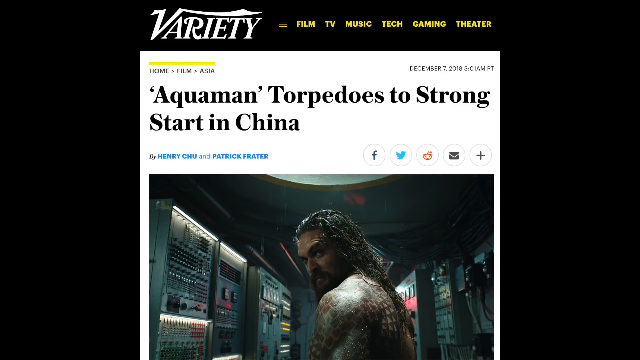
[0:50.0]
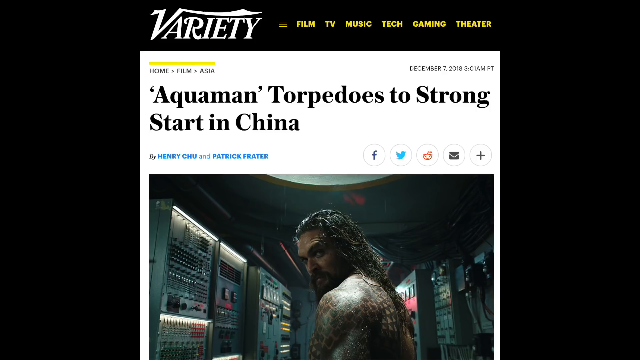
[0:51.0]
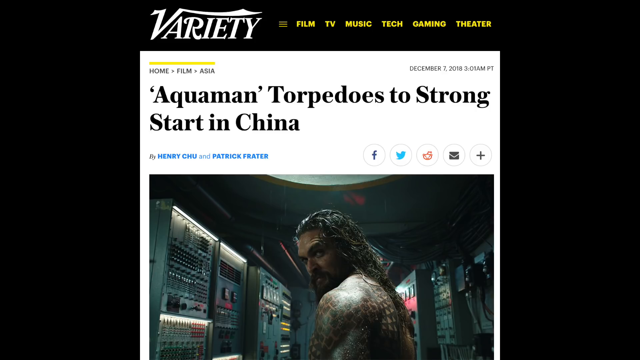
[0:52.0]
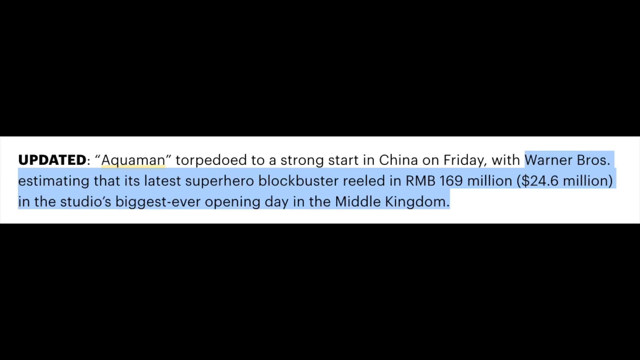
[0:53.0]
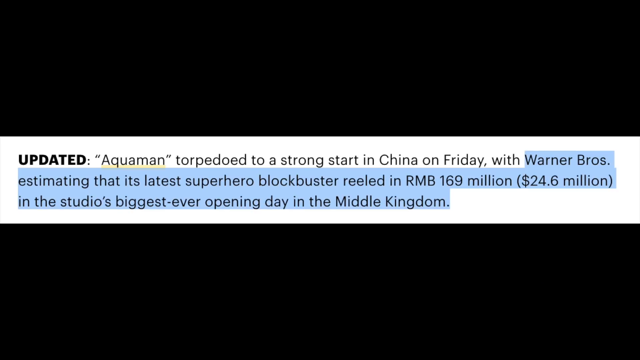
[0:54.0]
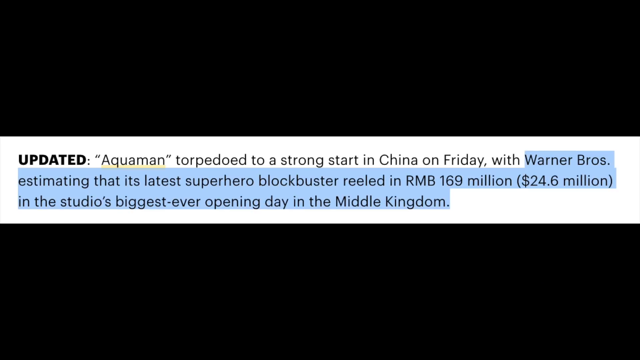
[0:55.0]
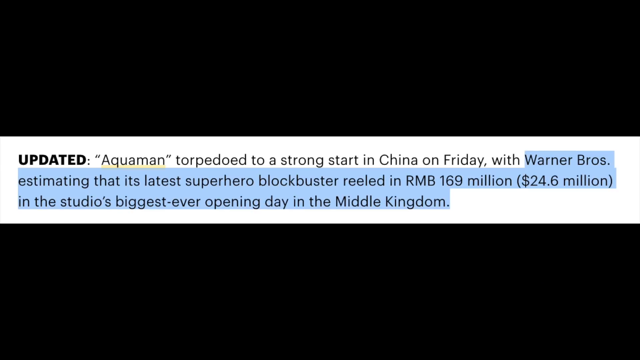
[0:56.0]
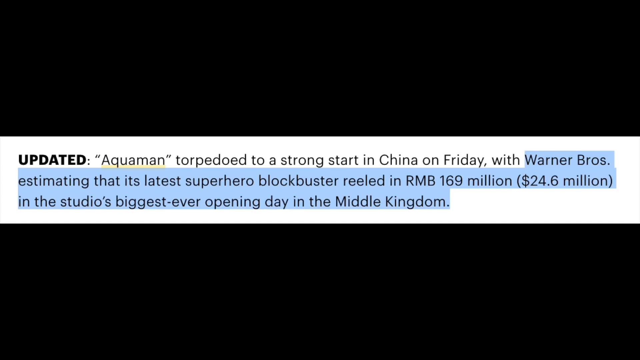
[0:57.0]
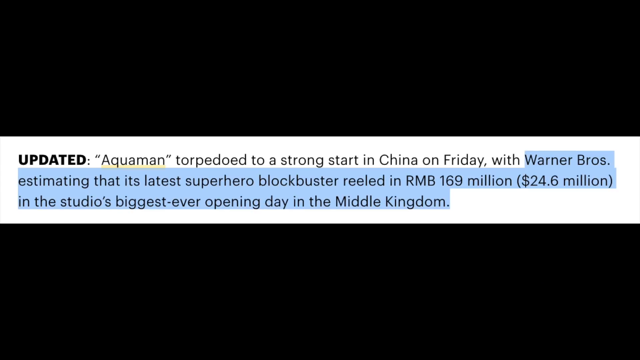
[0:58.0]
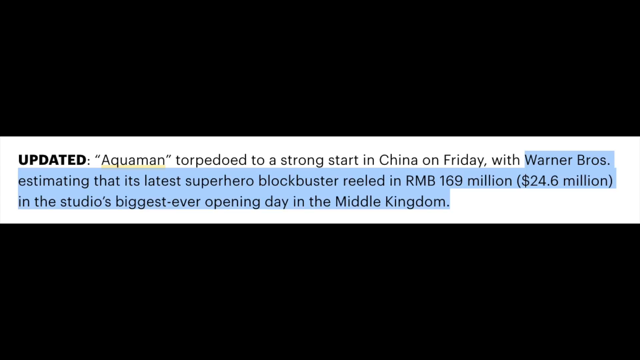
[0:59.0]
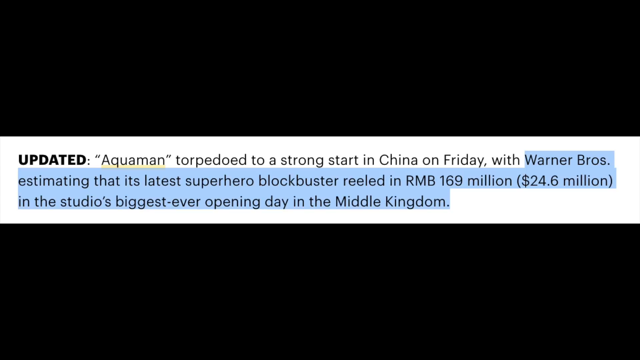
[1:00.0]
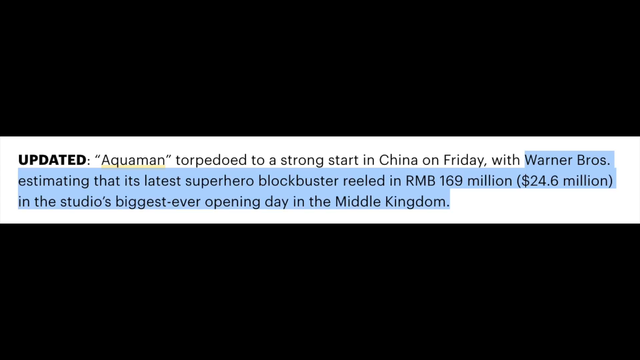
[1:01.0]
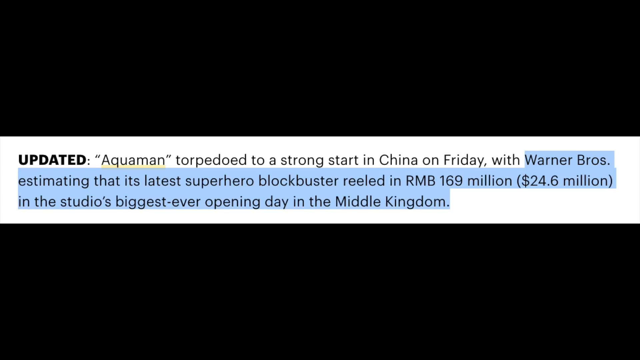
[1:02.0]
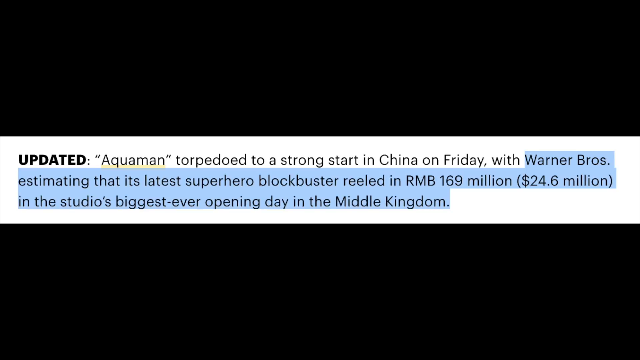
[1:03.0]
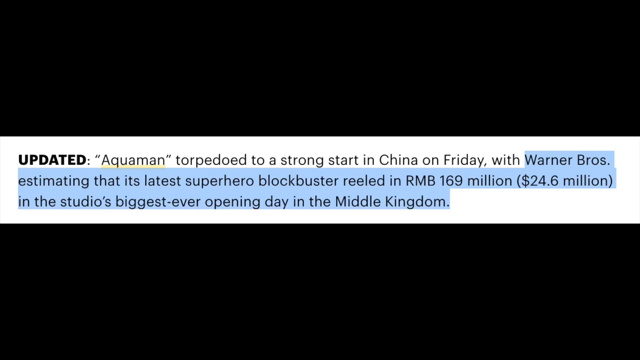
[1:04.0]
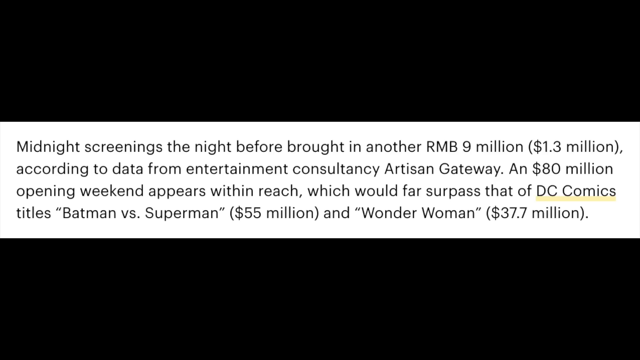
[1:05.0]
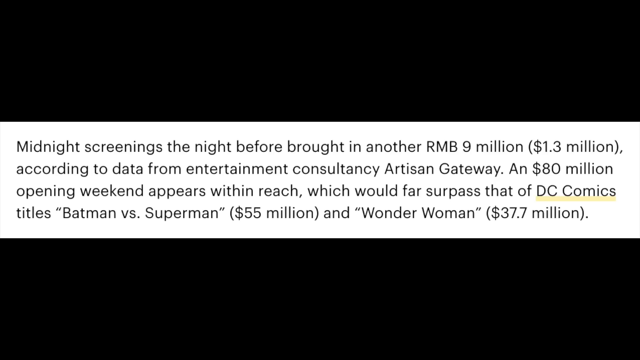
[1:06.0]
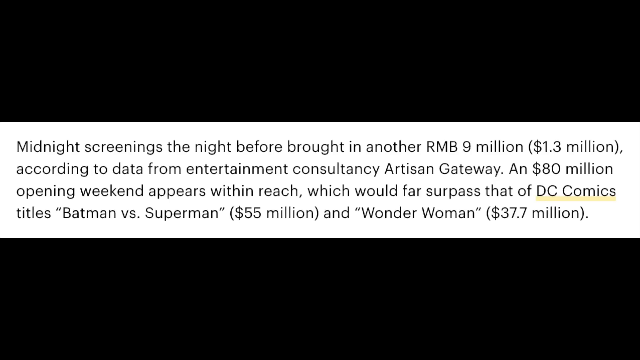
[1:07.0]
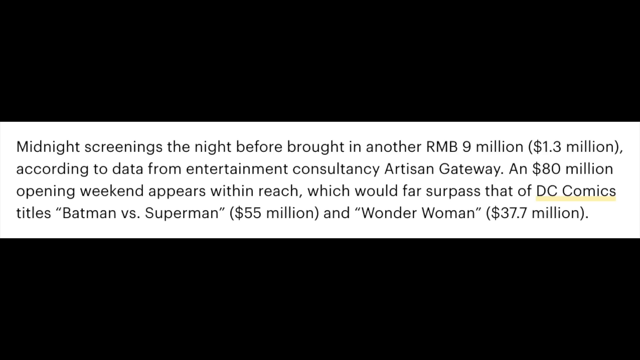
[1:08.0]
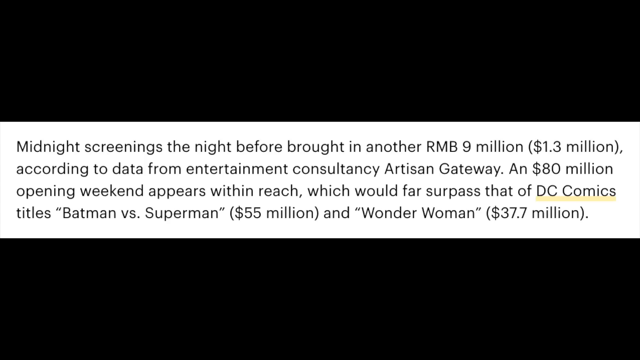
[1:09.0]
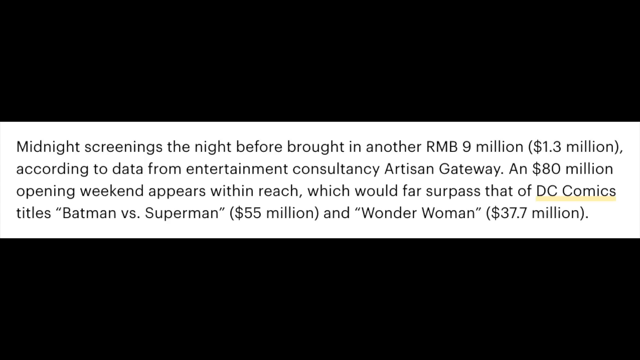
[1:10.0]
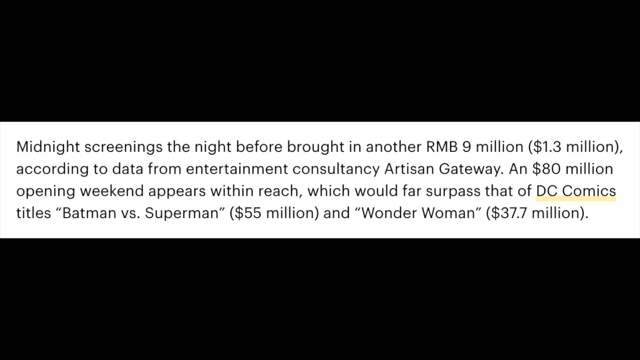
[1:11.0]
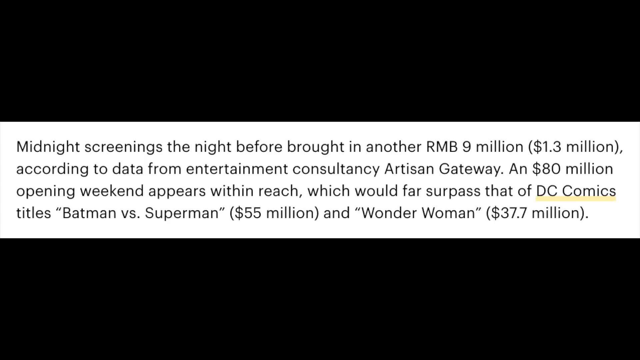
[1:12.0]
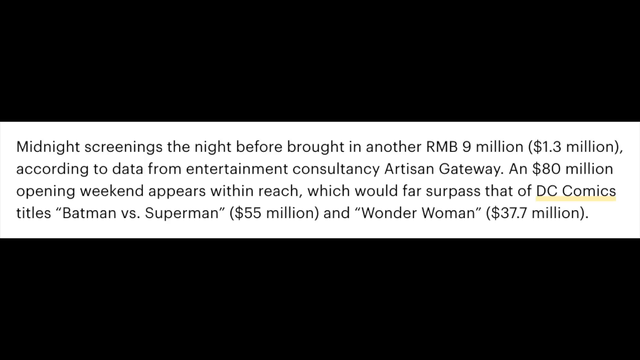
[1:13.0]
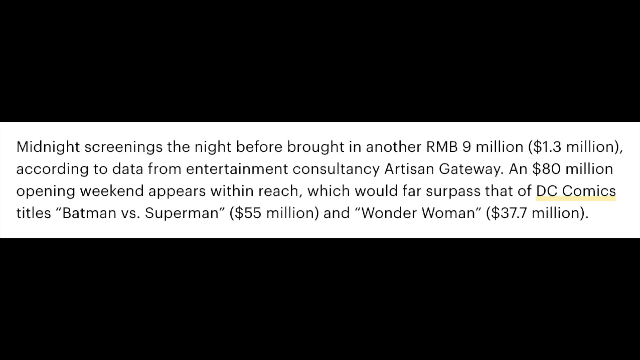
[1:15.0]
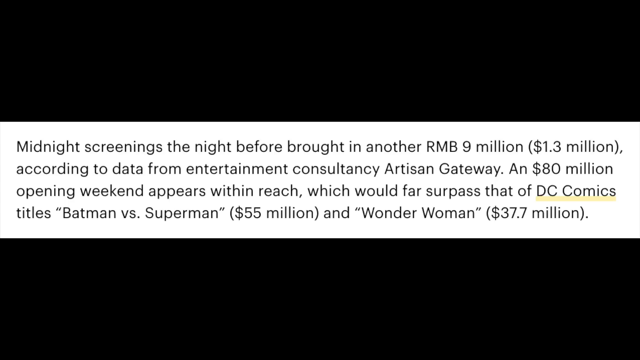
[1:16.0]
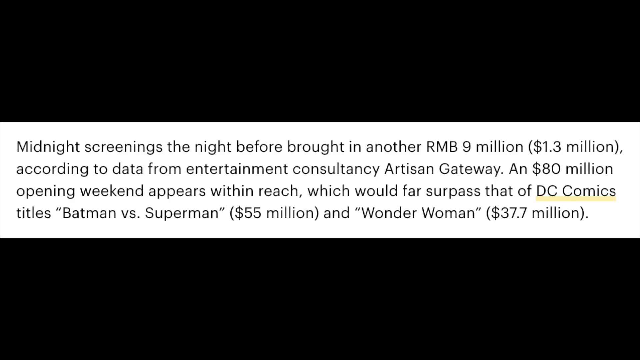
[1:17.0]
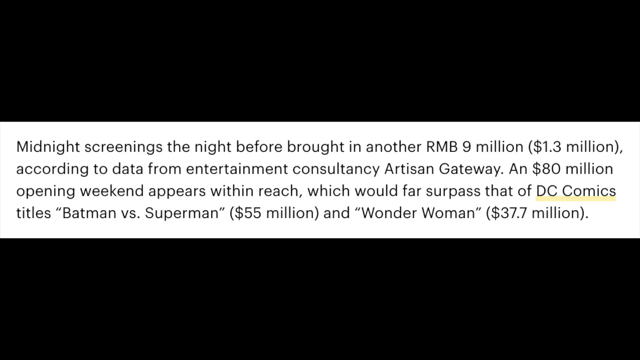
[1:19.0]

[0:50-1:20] A Variety Media web page says "Aquaman torpedoes to a strong start in China" and has an image of Jason Momoa as Aquaman, who looks wet and is in some sort of lab or submarine-type setting. Below it is an updated part in bold. The article then reads "Aquaman torpedoed to a strong start in China on Friday with Warner Bros estimating that" it took in RMB 169 million, approximately $24.6 million US, in the studio's biggest ever opening day in the Middle Kingdom. It continues: "Midnight screenings, the night before, brought in another RMB $9 million, which is $1.3 million U.S., according to data from entertainment consultancy" and "An $80 million opening weekend appears within reach, which would surpass that of DC Comics titles Batman vs. Superman, which was $55 million, and Wonder Woman, which was $37.7 million."